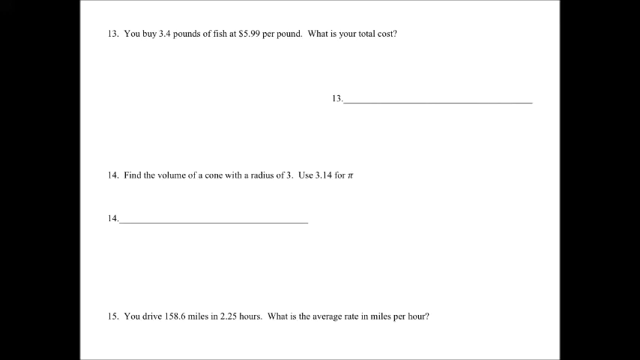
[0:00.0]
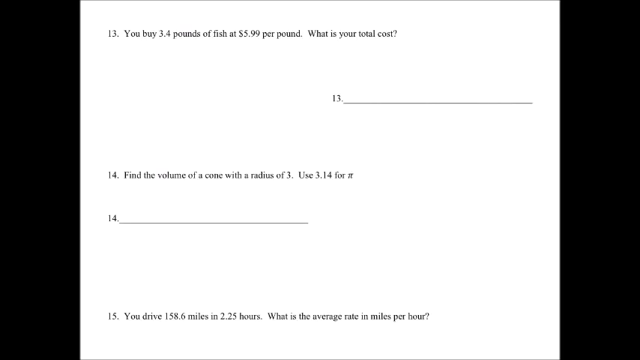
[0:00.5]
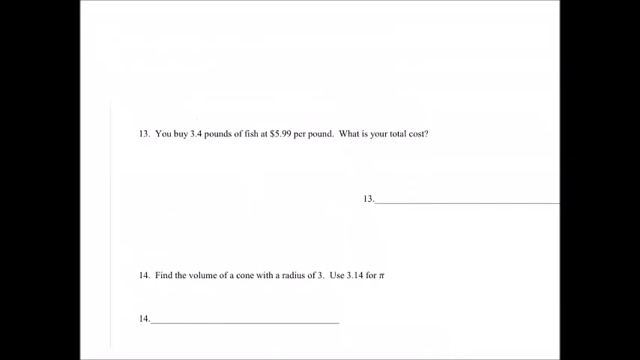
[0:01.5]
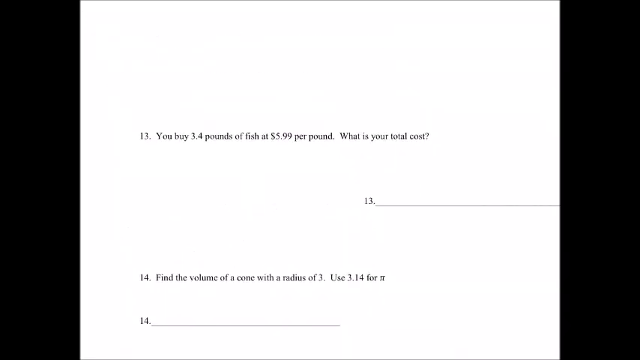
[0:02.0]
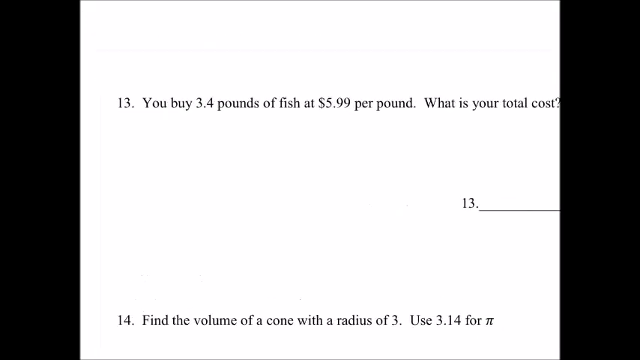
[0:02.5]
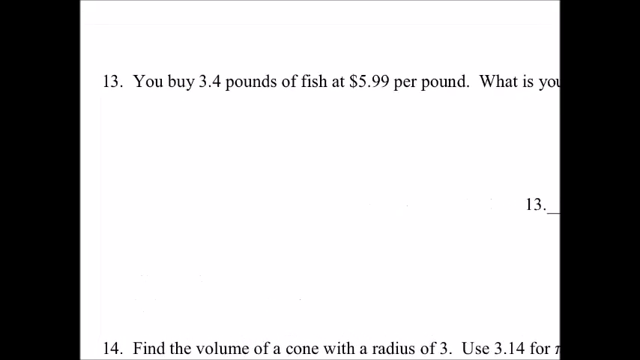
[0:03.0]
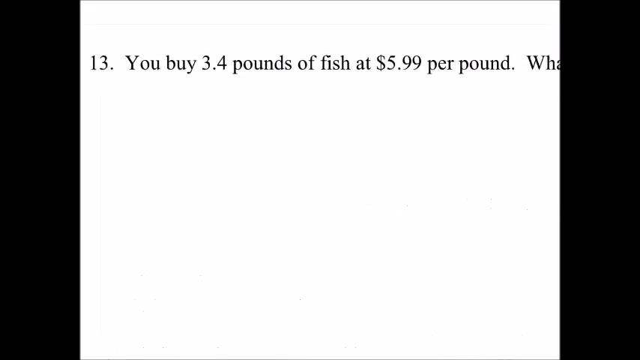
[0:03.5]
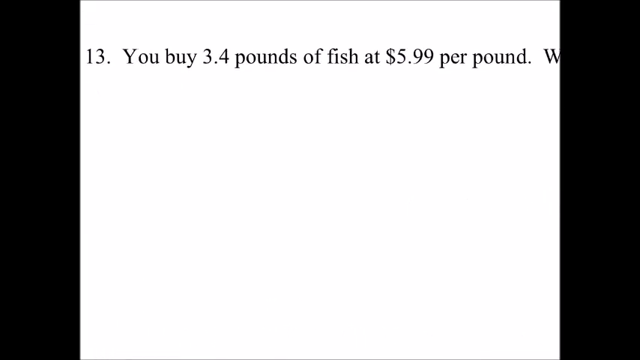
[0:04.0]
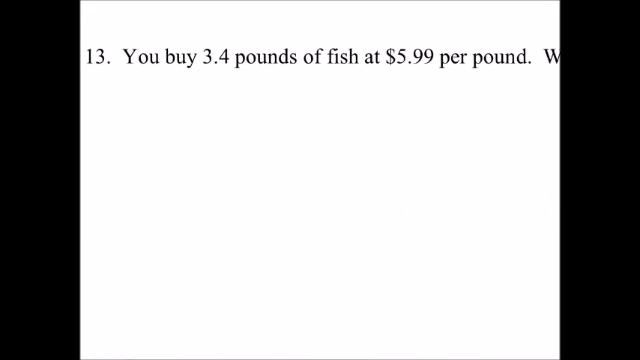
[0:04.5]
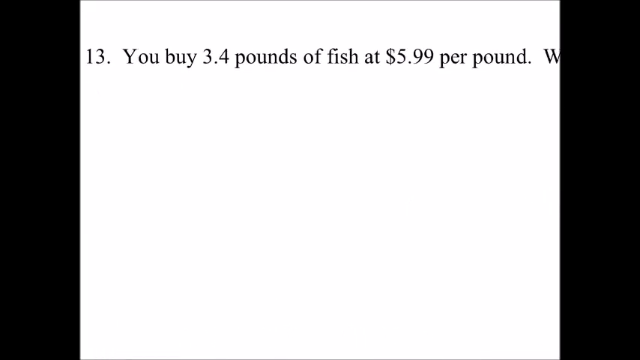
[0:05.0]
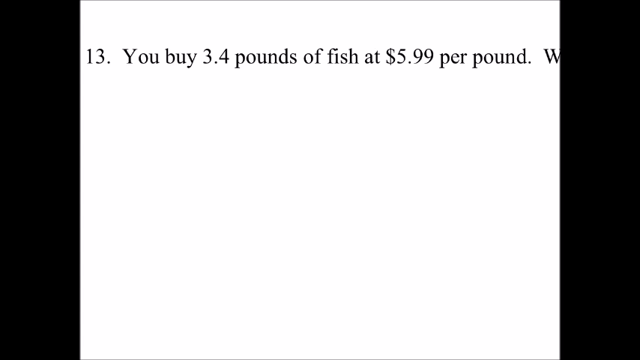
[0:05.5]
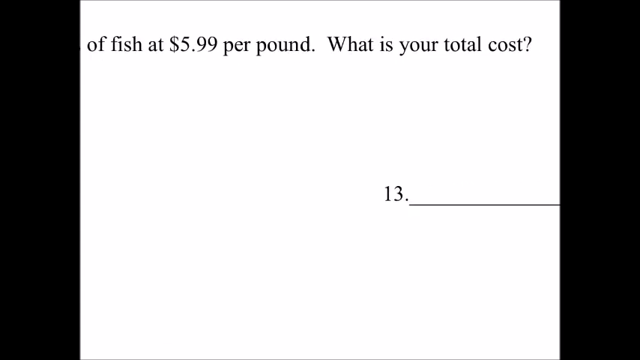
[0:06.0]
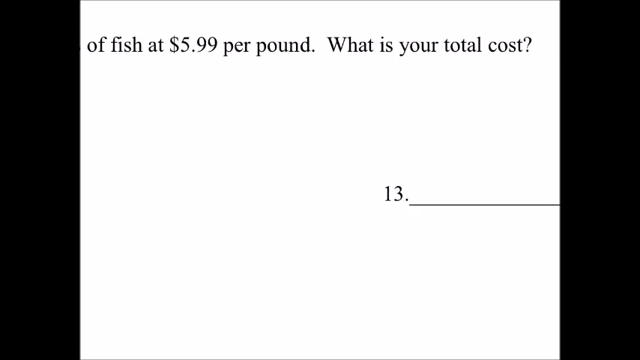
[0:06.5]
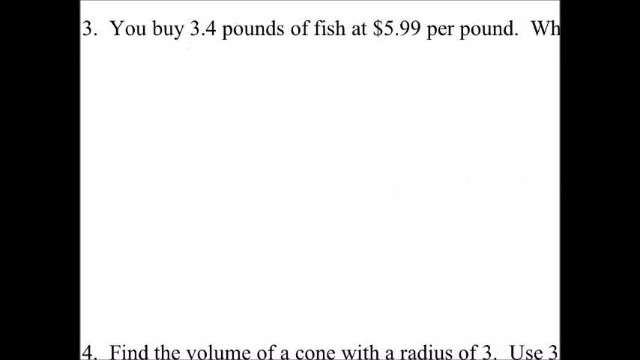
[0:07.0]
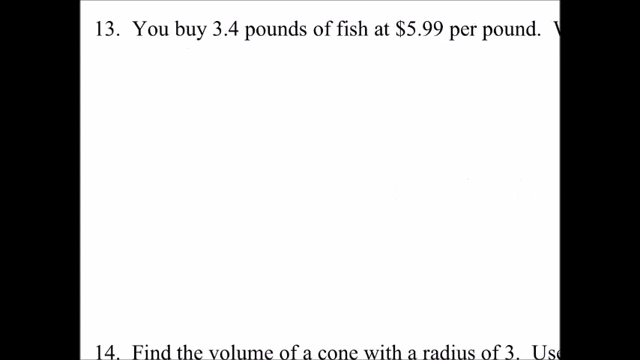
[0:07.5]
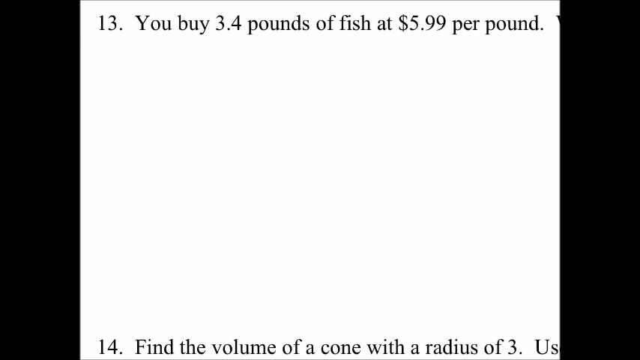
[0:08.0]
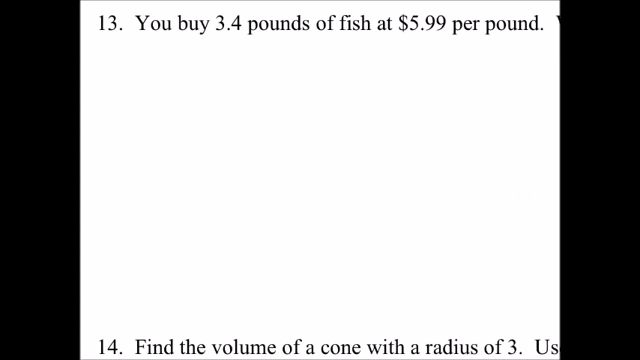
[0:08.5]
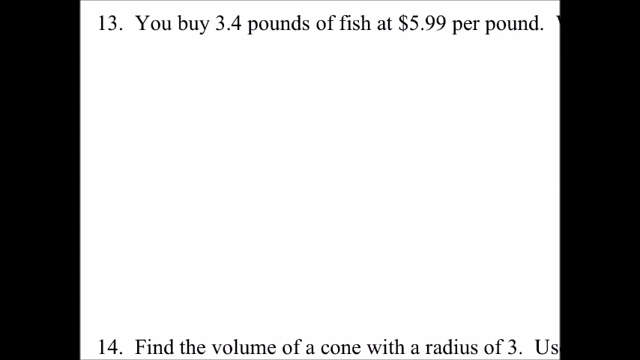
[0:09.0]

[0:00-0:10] The video opens on a black screen with what appears to be a white square in the center. Inside the square are two numbered items, 13 and 14, each with a sentence beside it. Item 13 says "you buy 3.4 pounds of fish at $5.99 per pound. What is your total cost?" Below that question, to the right, is another number 13 next to a blank underlined space for writing an answer. Item 14 says "find the volume of a cone with a radius of 3. Use 3.14", and directly below that statement is a line with the number 14 in front of it and a blank underline for the answer. The view scrolls up on the paper and moves closer to question 13, showing both the question and its blank answer line, then returns to the main screen.